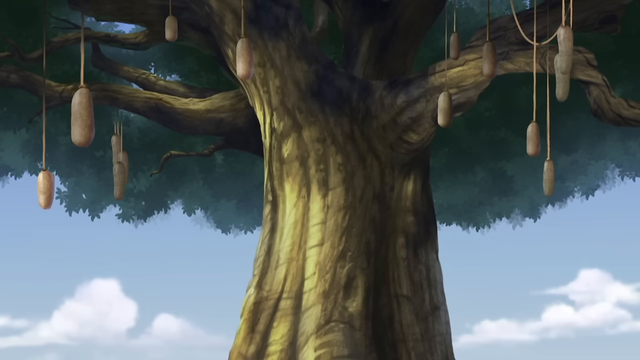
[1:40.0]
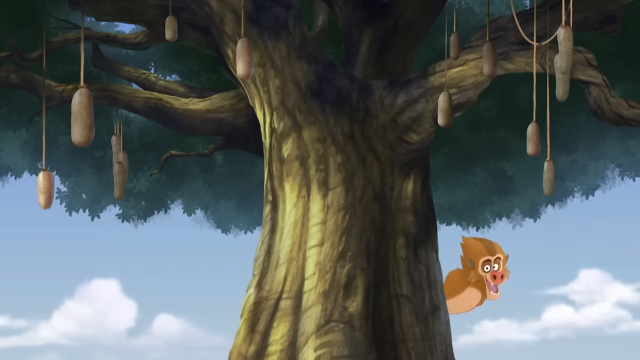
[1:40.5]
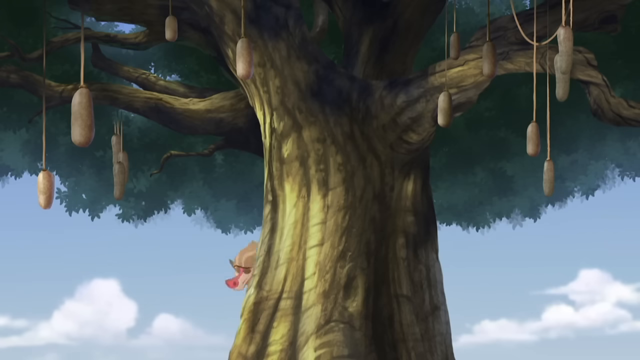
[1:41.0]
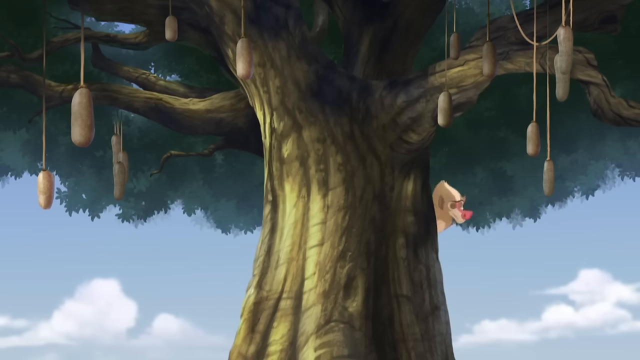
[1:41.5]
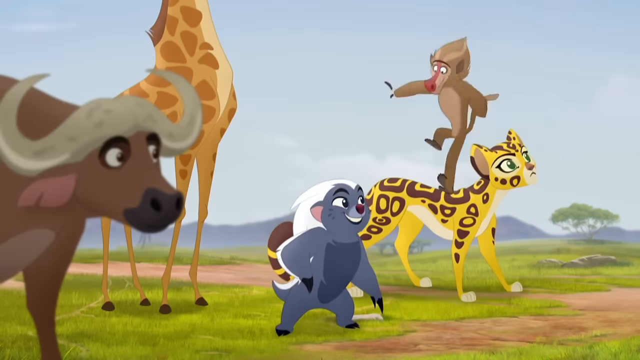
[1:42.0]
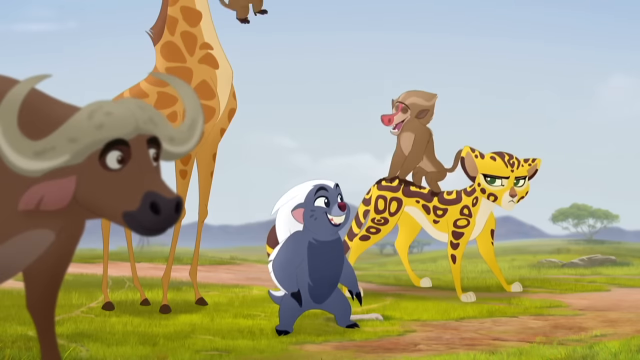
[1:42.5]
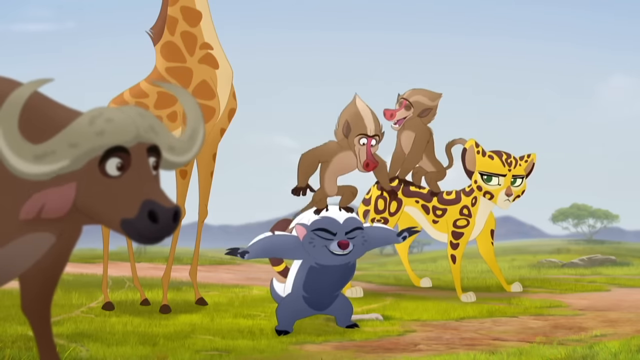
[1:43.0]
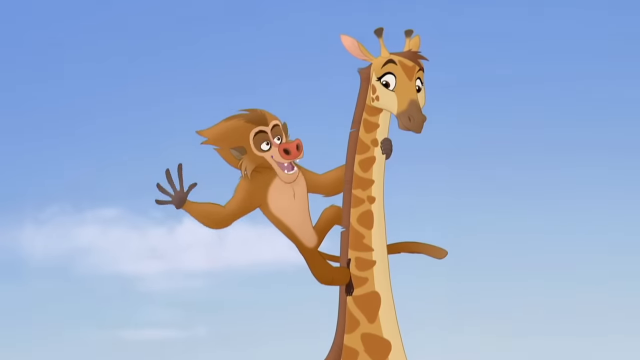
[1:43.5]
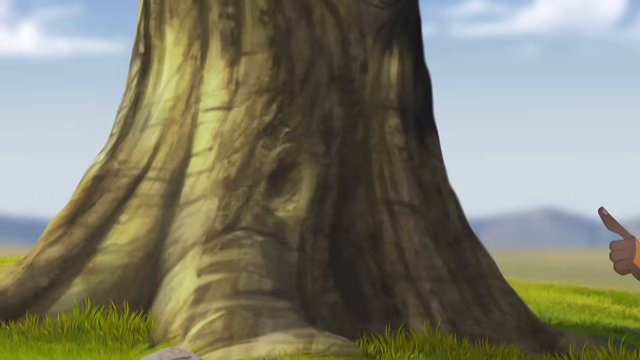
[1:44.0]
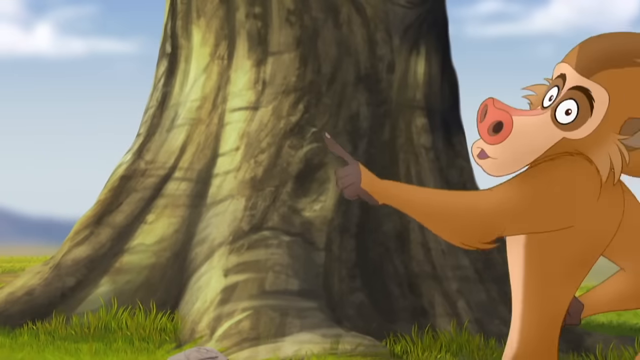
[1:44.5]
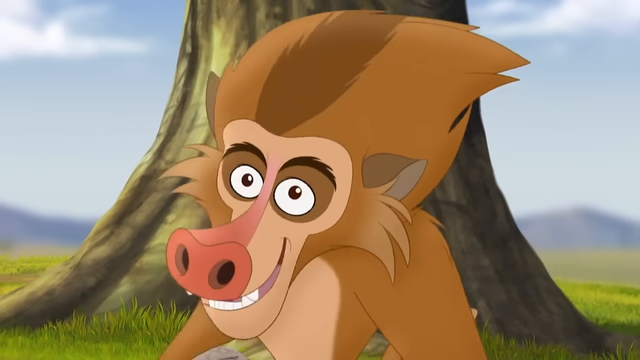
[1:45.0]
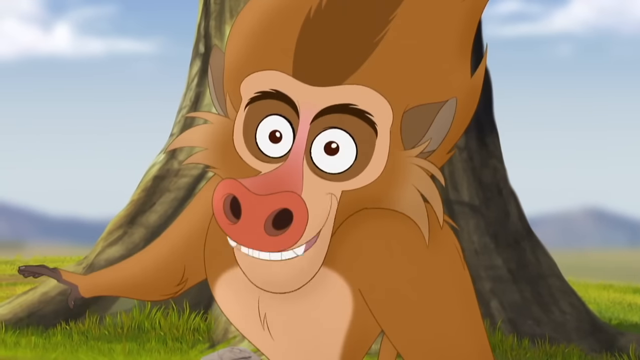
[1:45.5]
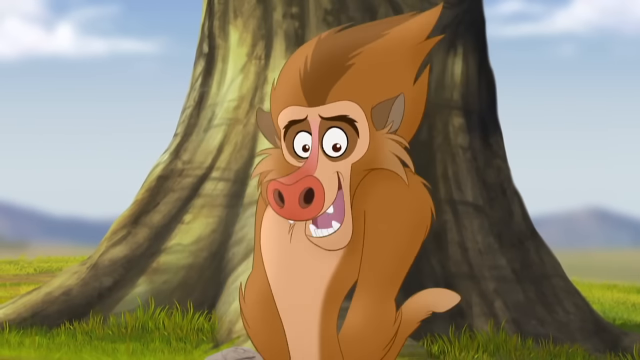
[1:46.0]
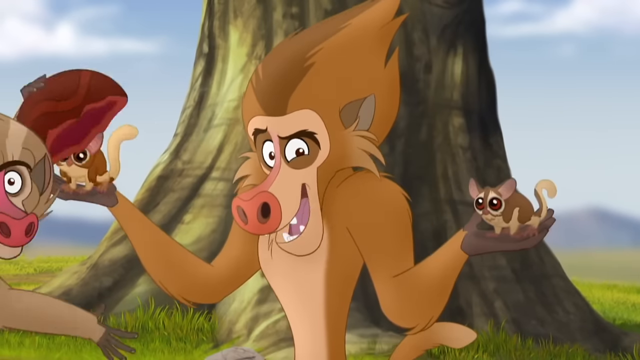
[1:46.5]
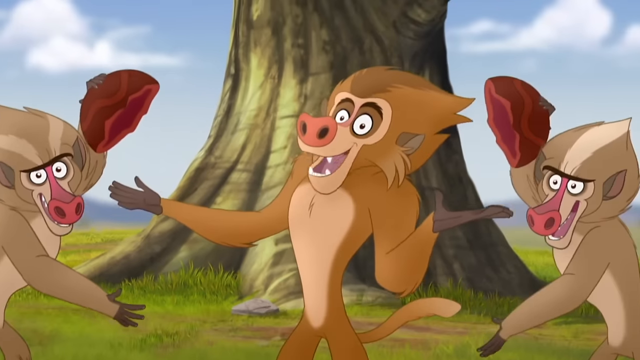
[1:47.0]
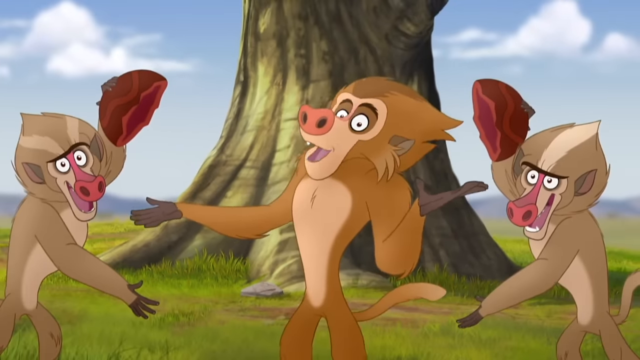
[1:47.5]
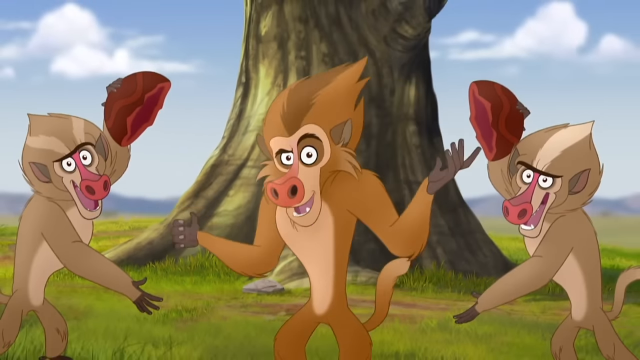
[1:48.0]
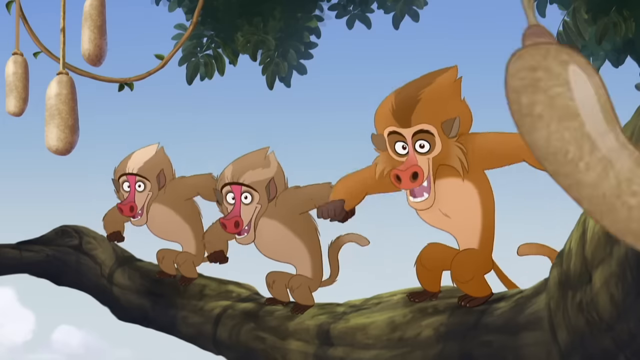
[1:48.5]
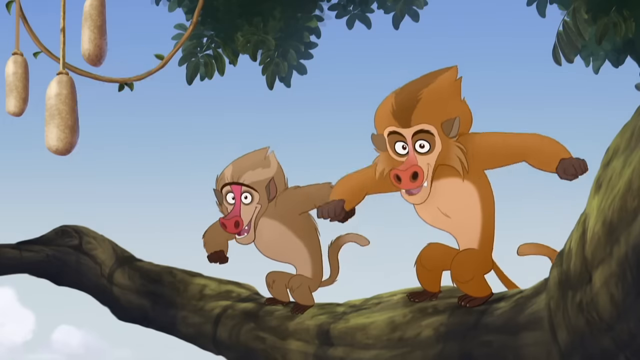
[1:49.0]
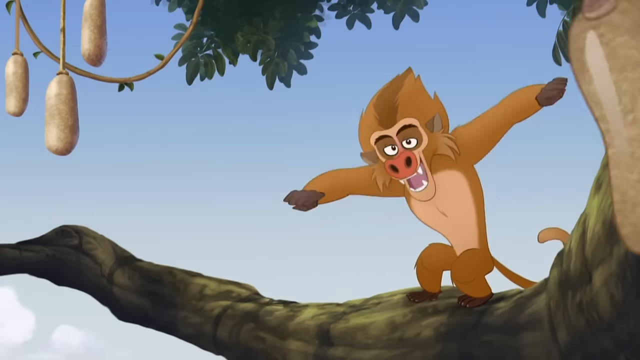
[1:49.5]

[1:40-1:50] From the perspective of the tree, the three baboons pop out from different sides of the tree as they sing along. One jumps onto the back of the very annoyed cheetah, one jumps onto the raccoon, and the darker one hangs on the neck of the giraffe, who looks amused. They are still singing. The darker brown baboon dances in front of the screen as he walks in front of the tree, looking into the camera, talking and singing. He pulls out the two little squirrel-looking animals, one in each hand, and the two other baboons come with half-cracked coconuts to cover them, and they are gone. The three baboons sit in the tree as the sausage-like fruits tick by; one baboon disappears, they tick by again, and another disappears.